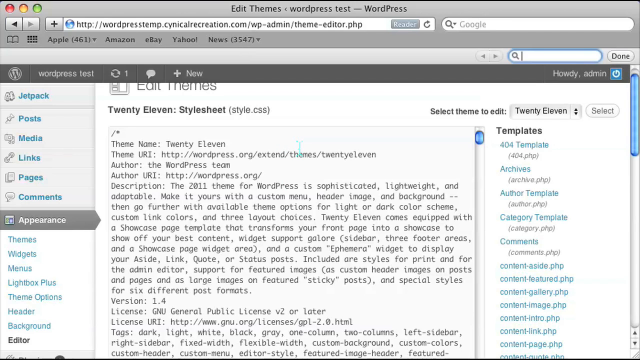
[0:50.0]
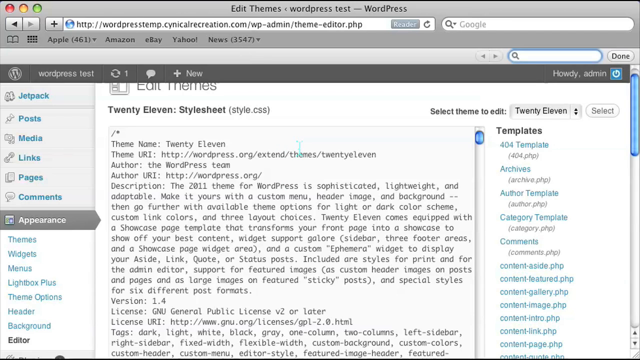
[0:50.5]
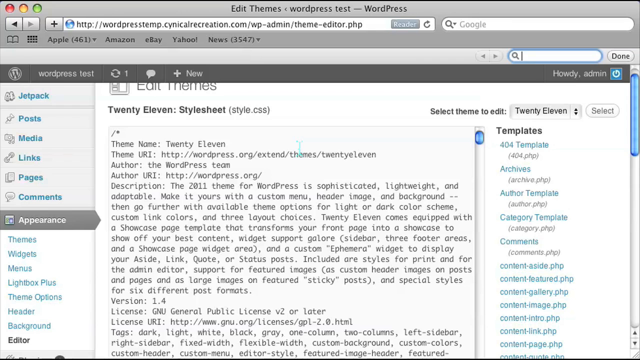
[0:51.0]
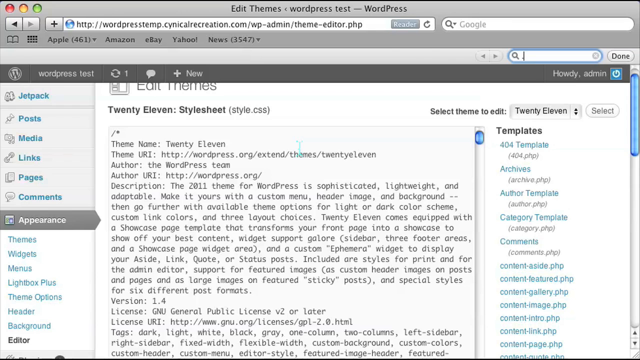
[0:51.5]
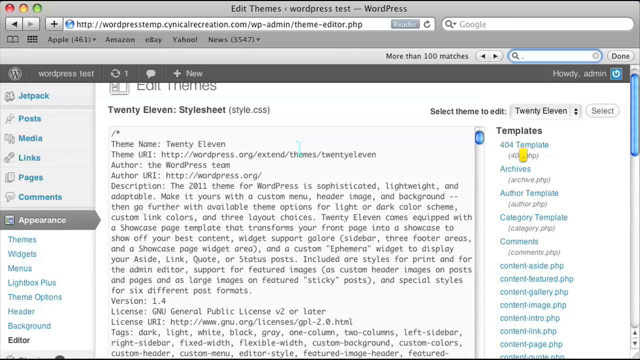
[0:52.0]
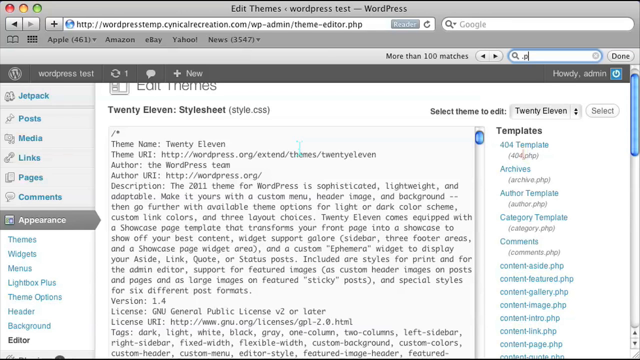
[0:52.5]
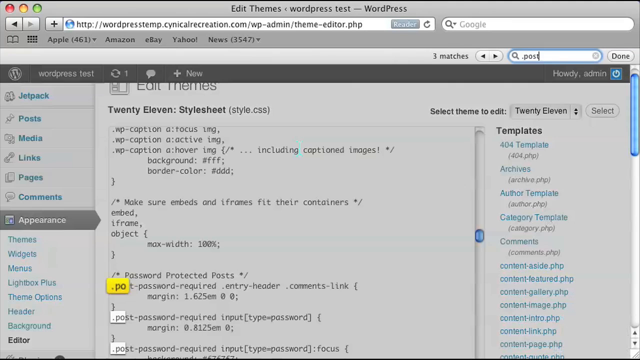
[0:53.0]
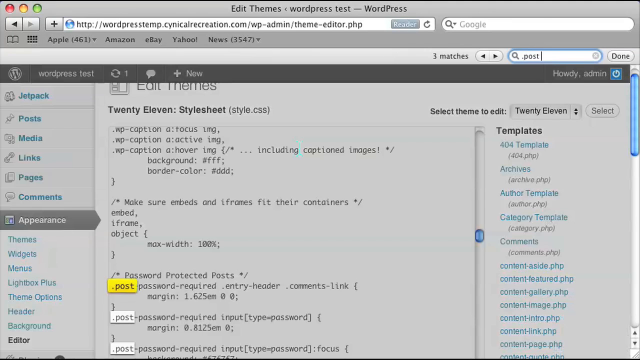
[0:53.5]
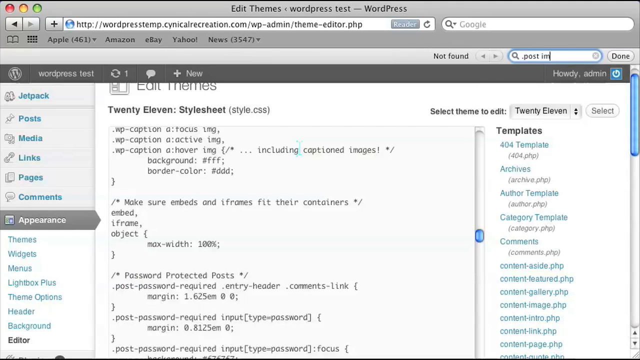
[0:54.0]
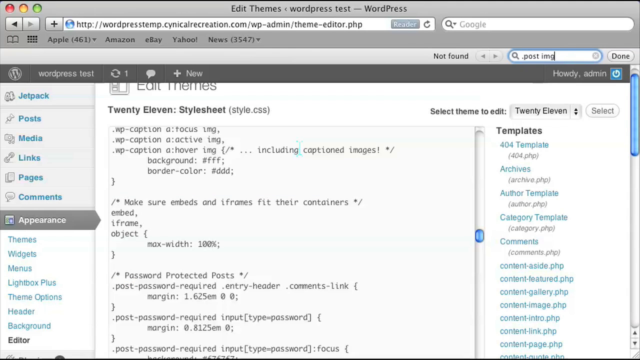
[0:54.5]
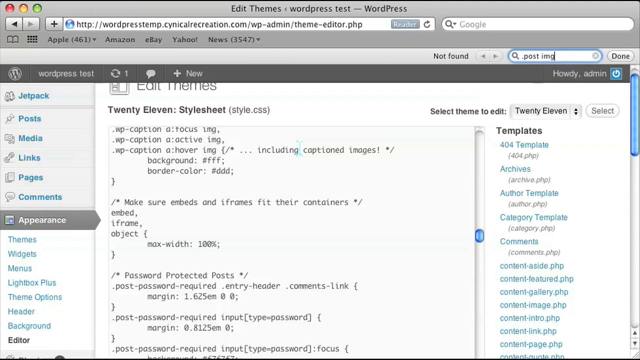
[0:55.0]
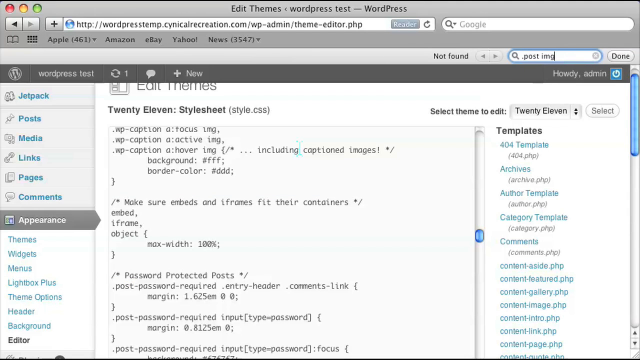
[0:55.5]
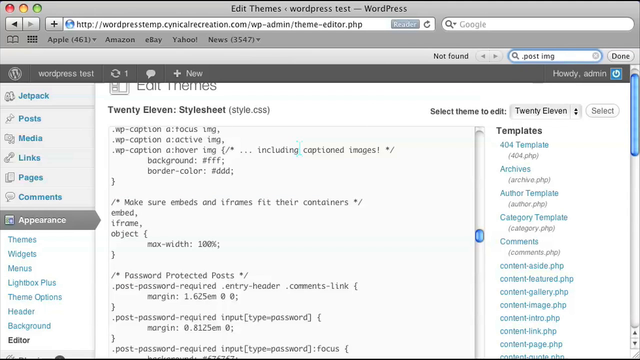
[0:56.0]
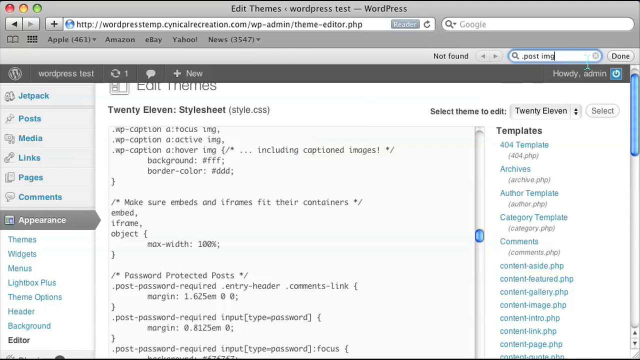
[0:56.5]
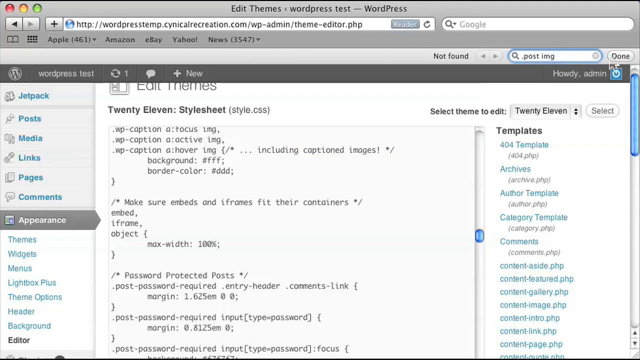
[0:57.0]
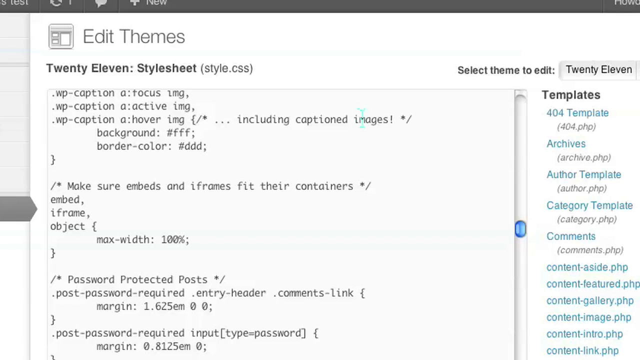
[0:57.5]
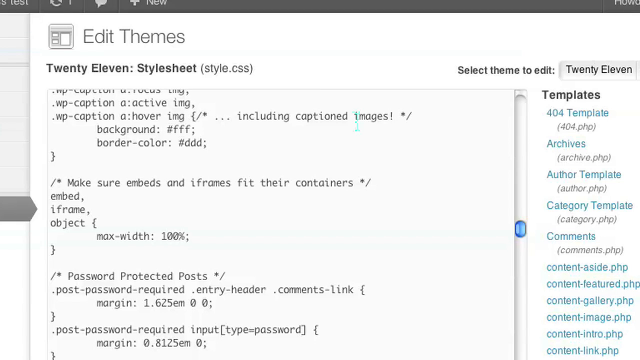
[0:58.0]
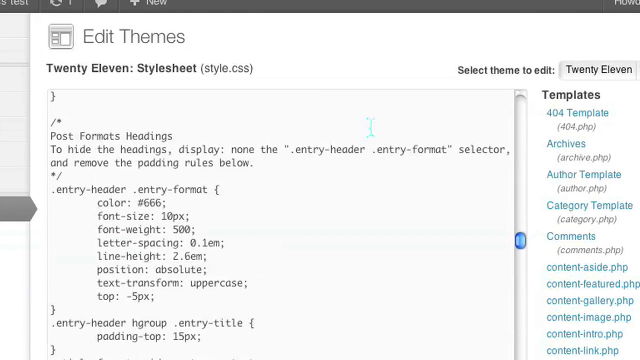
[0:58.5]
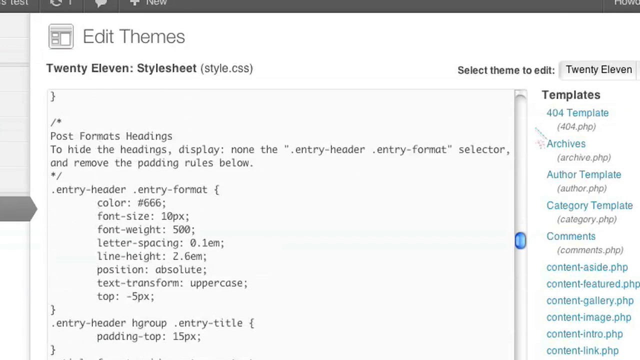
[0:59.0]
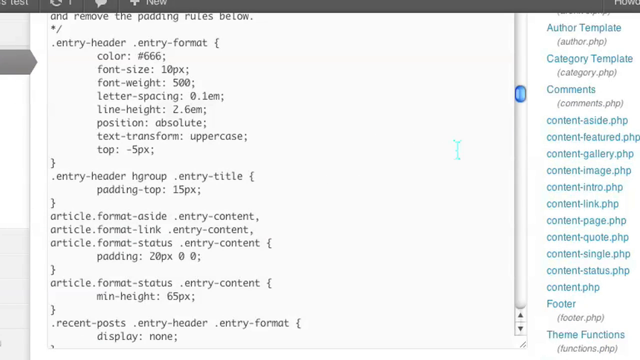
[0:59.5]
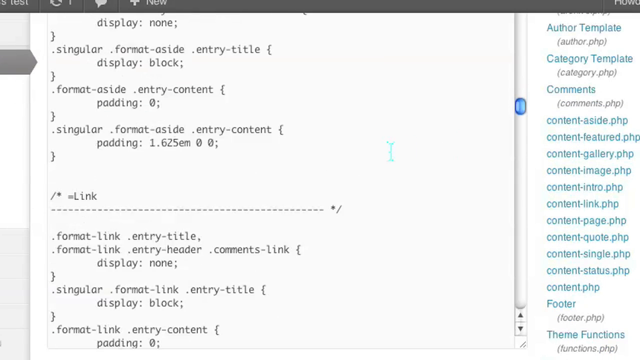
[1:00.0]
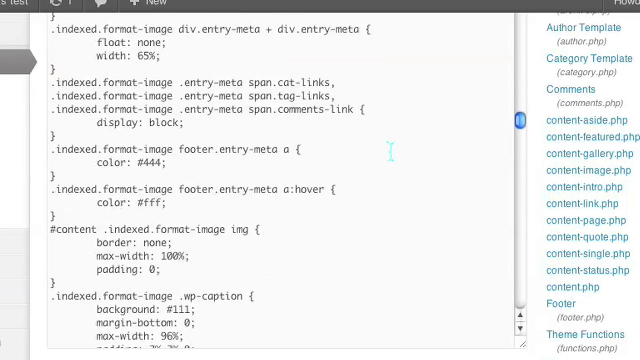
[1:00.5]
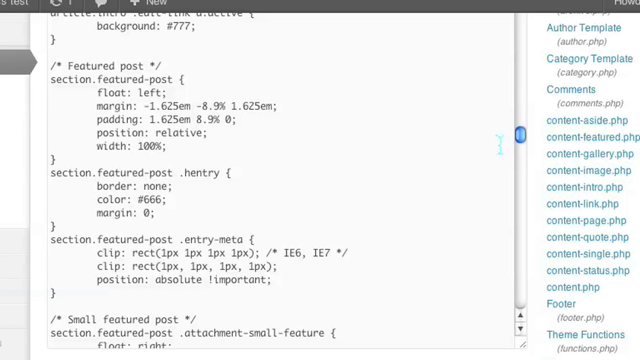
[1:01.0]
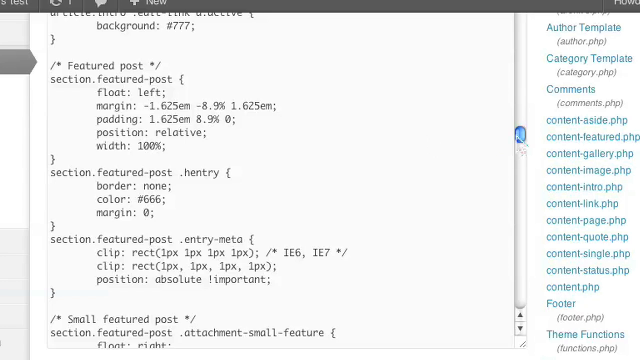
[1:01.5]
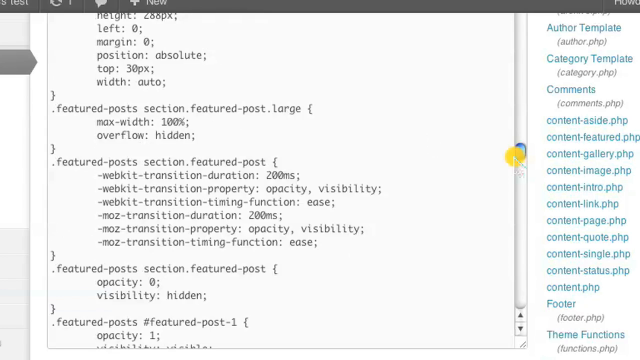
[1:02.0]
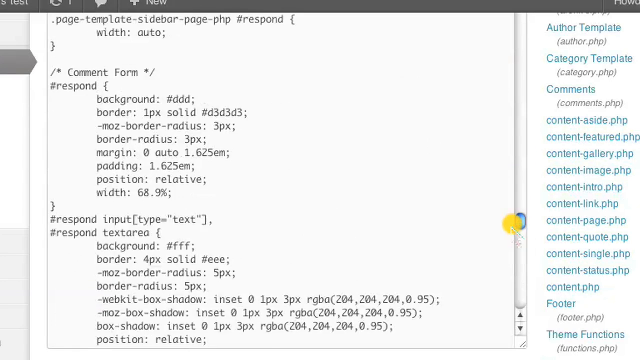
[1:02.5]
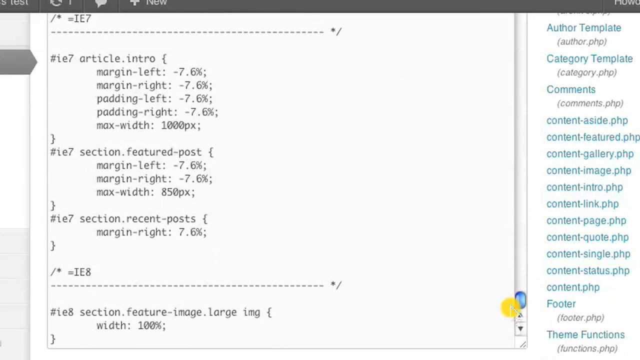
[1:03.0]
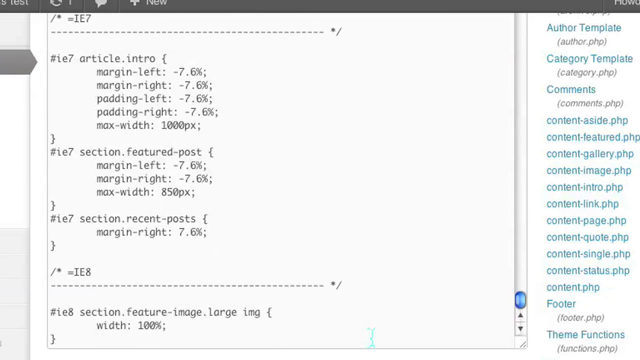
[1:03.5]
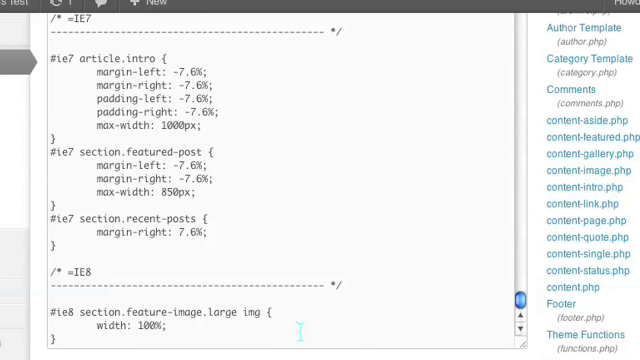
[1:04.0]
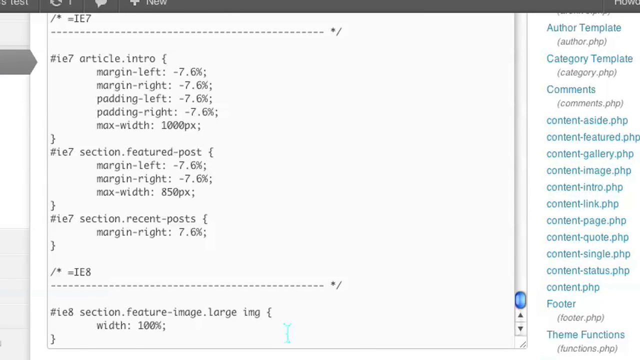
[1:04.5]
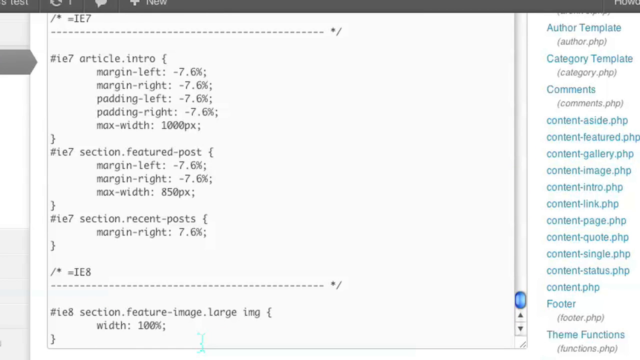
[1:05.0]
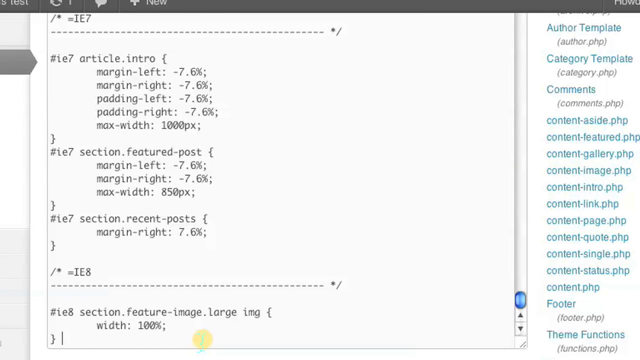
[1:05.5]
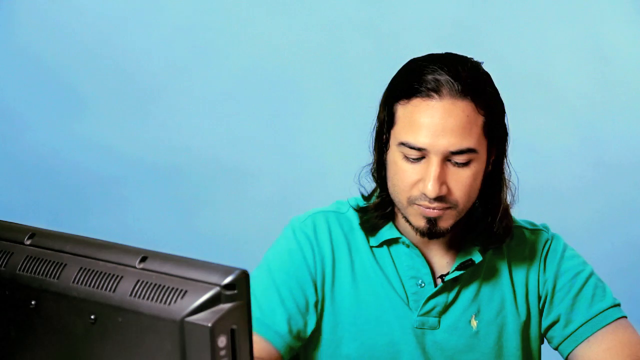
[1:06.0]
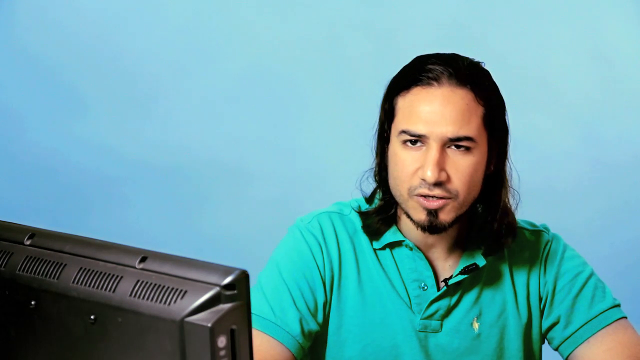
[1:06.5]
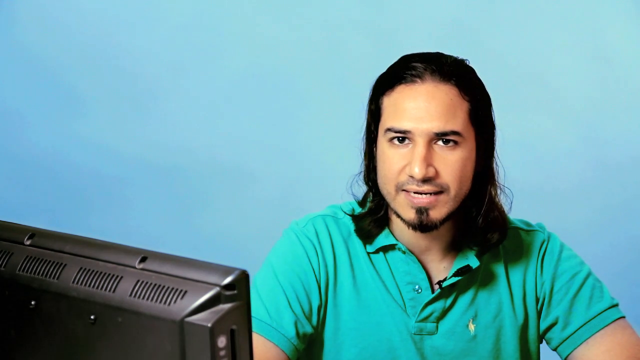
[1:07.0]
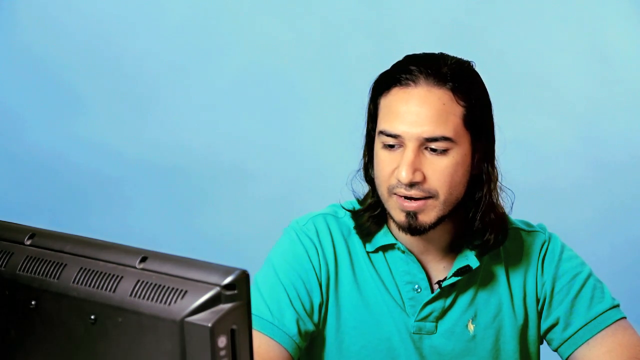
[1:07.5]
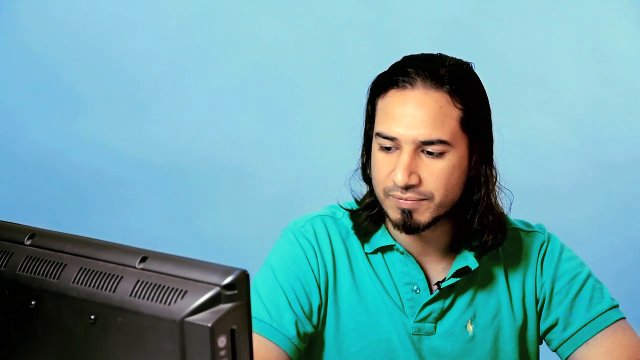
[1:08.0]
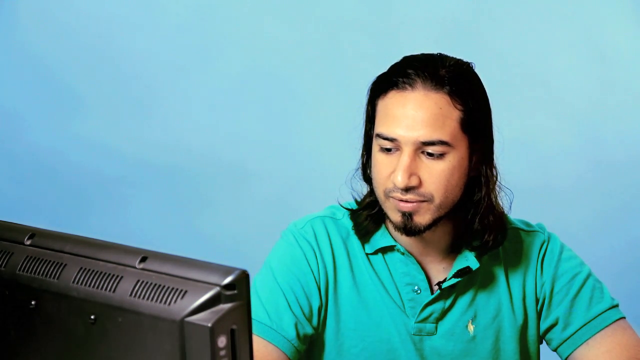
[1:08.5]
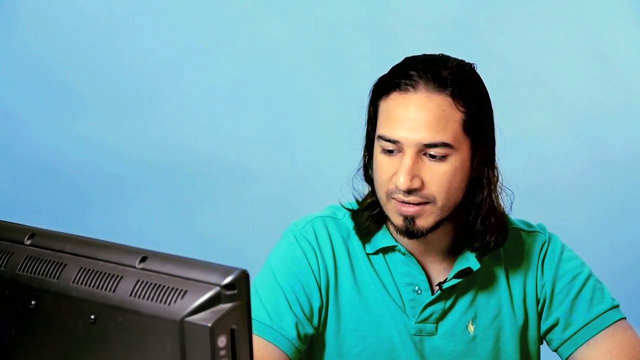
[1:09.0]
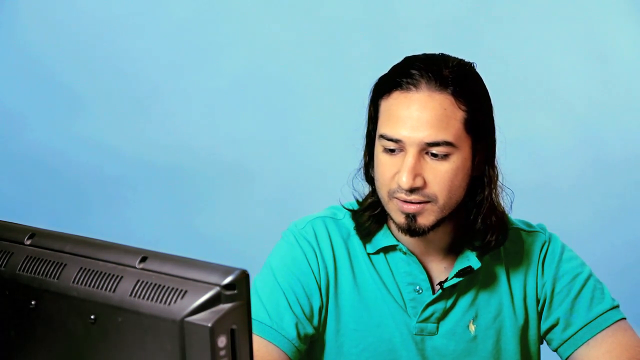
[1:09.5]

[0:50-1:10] A computer screen shows "Jetpack" at the top left. Below it, in blue letters, are "Post", "Media", "Links", "Pages", "Comments" and "Appearance". Appearance is selected, shown in white on gray. Below it, in blue letters, are "Themes", "Widgets", "Menus", "Lightbox Plus", "Theme Options", "Header" and "Background". To the right, at the top of the page, it reads "Edit Menu", with "2011..Style Sheet" below, then "Style.CSS" in parentheses, and a lot of information beneath. The mouse pointer goes to the search menu at the top right, where ".Post IMG" is typed, and then clicks Done. The view zooms in on the Edit Themes page and begins scrolling down through a lot of information in black letters. The video then returns to the man talking, facing the camera against the blue background and looking toward the bottom left of the screen where the computer monitor is.